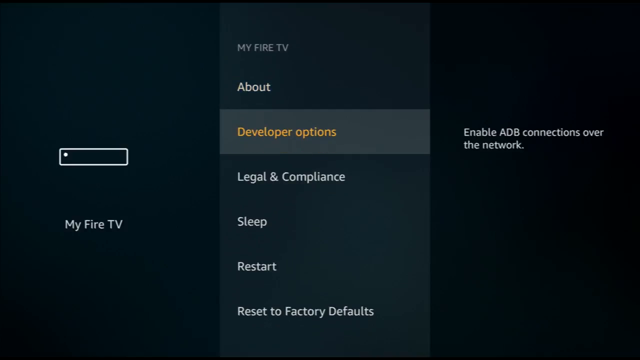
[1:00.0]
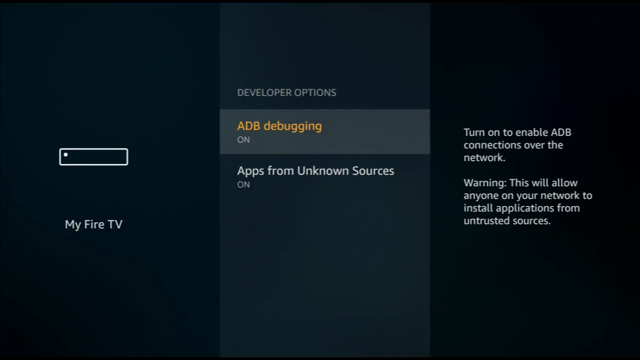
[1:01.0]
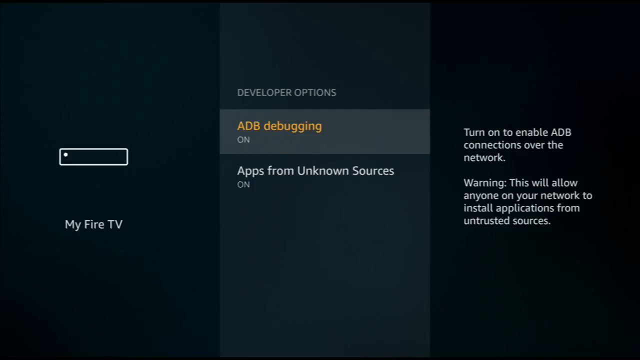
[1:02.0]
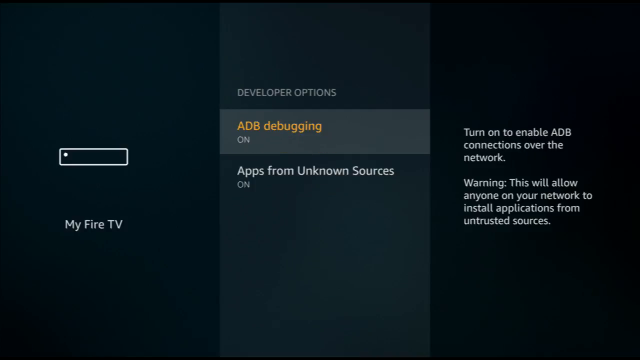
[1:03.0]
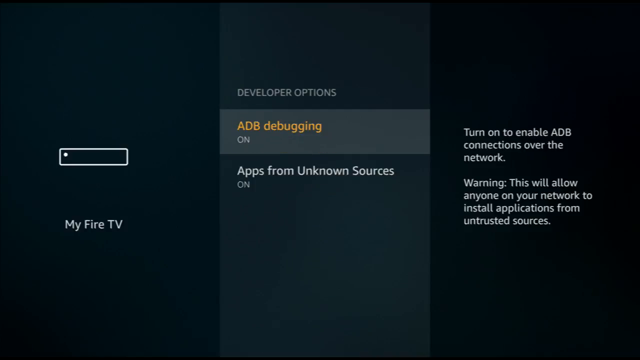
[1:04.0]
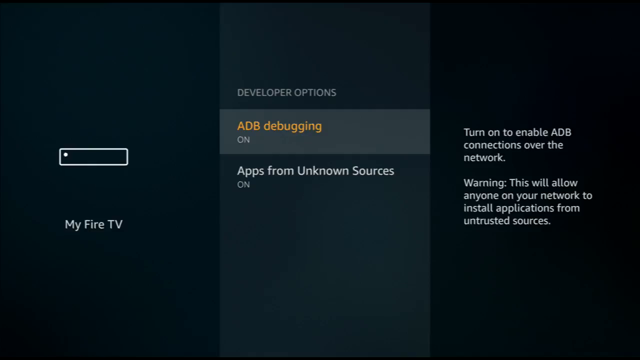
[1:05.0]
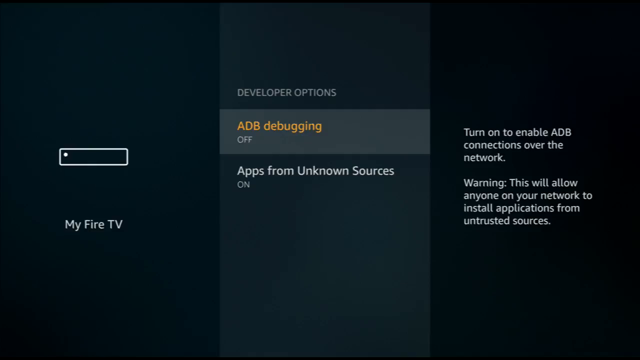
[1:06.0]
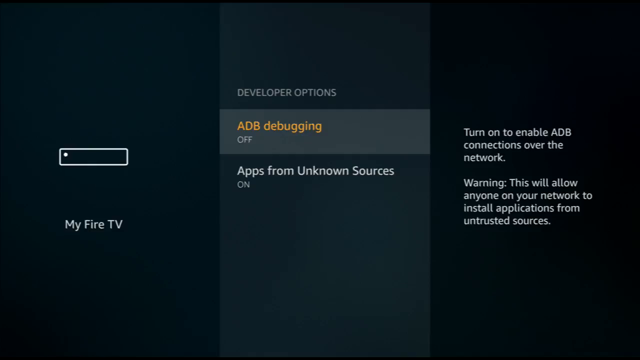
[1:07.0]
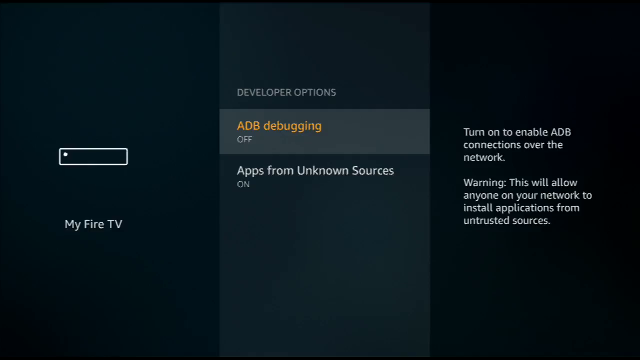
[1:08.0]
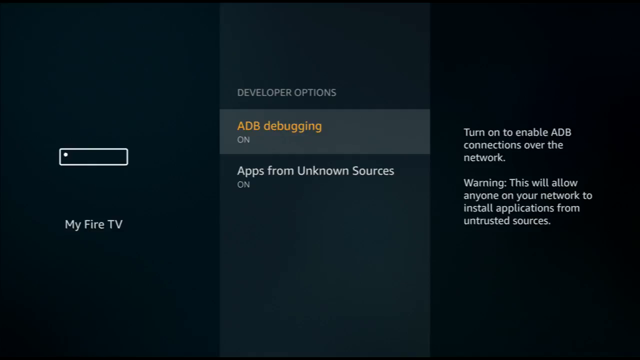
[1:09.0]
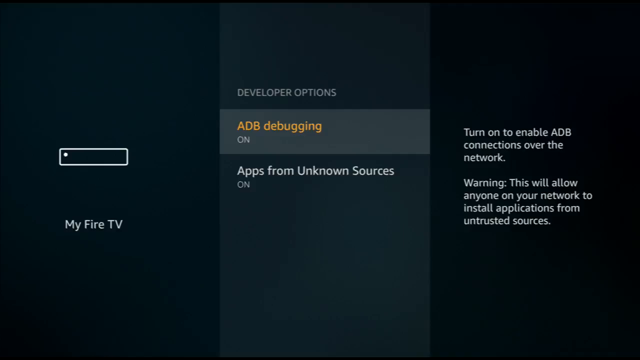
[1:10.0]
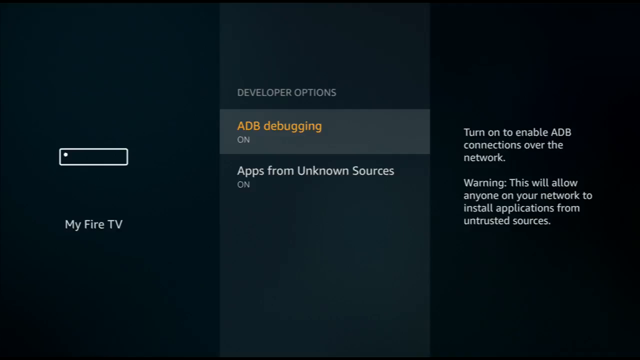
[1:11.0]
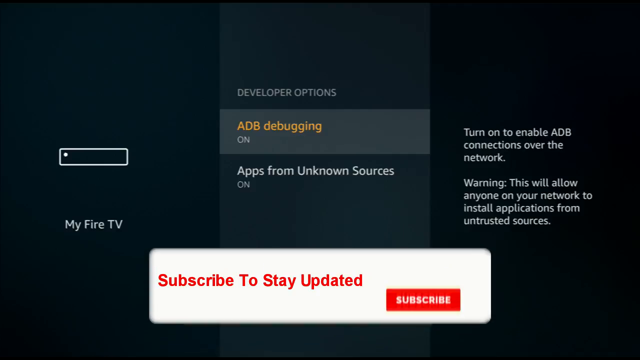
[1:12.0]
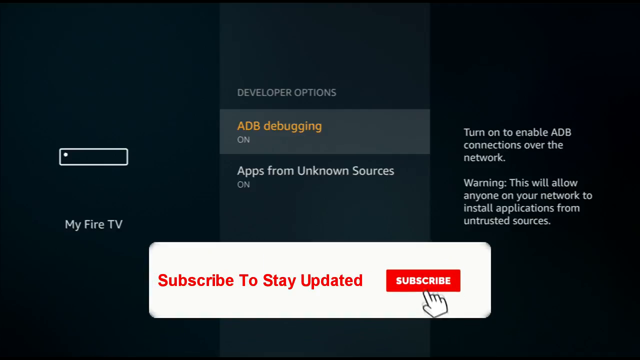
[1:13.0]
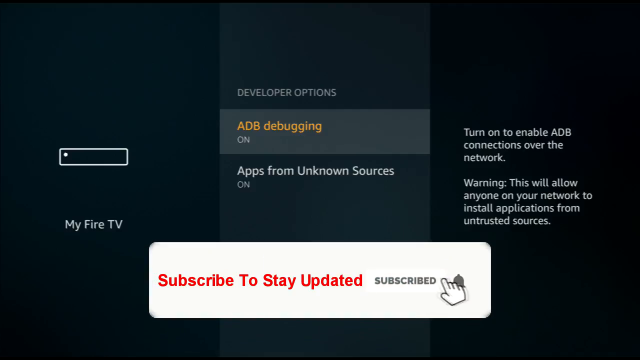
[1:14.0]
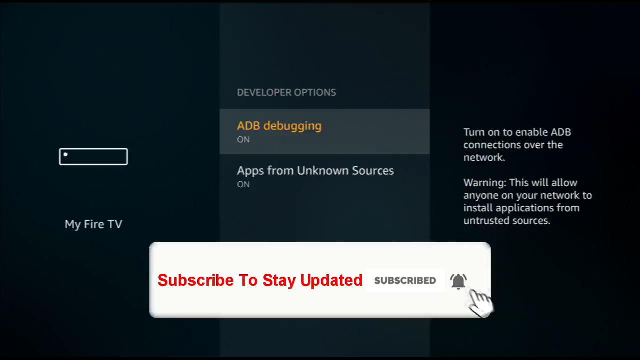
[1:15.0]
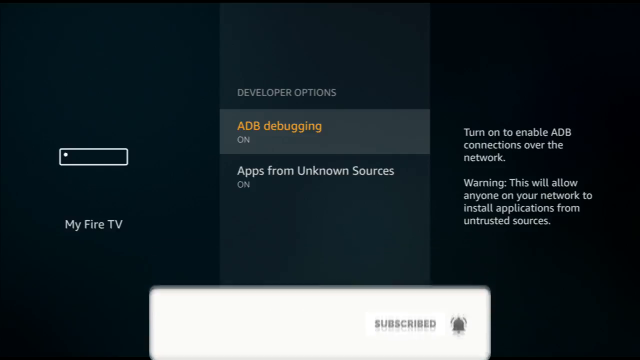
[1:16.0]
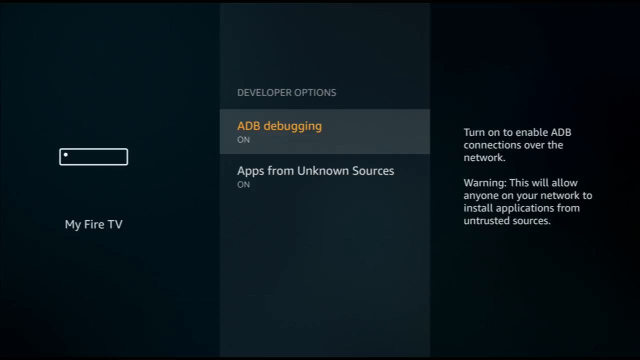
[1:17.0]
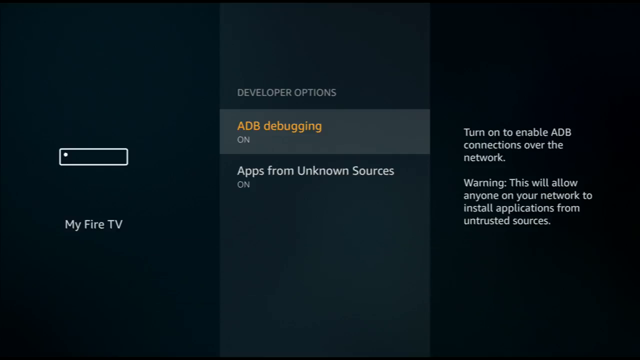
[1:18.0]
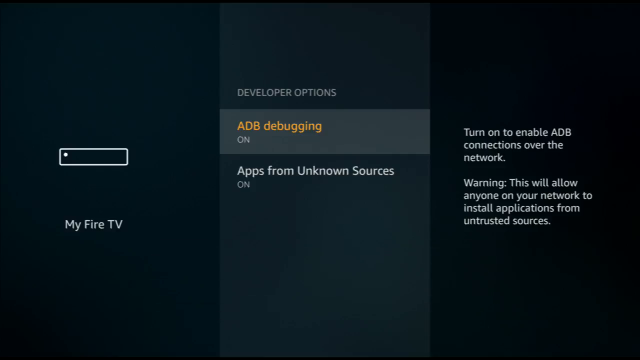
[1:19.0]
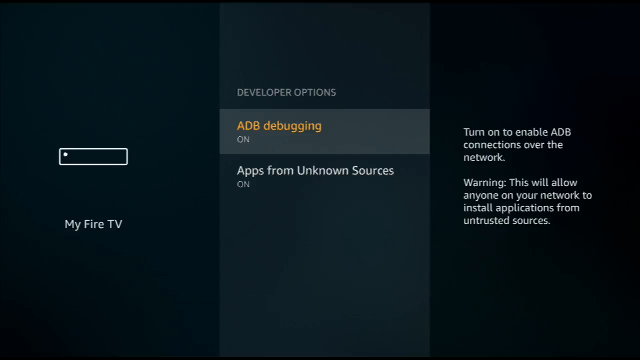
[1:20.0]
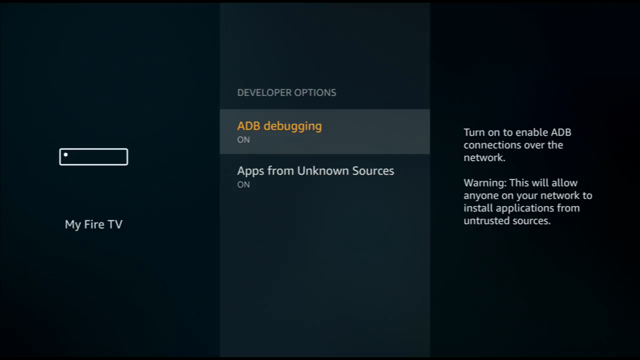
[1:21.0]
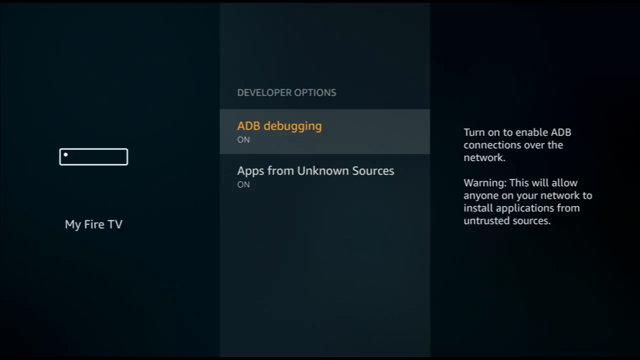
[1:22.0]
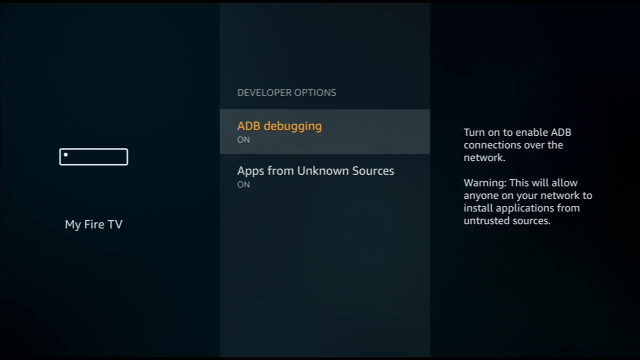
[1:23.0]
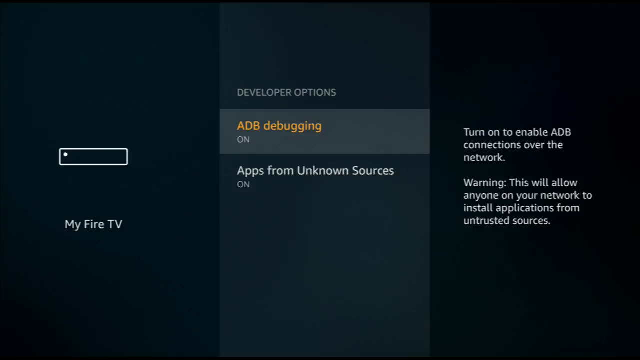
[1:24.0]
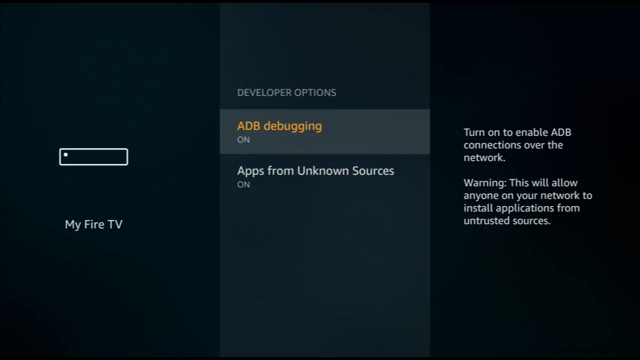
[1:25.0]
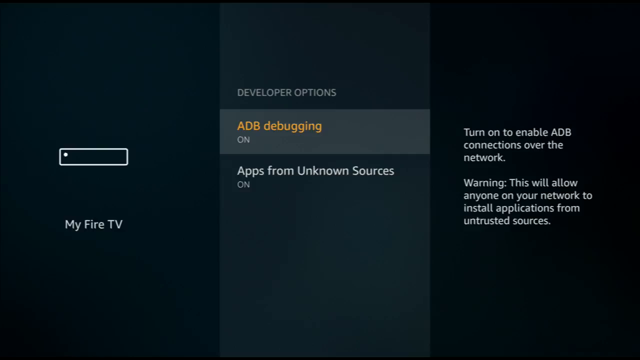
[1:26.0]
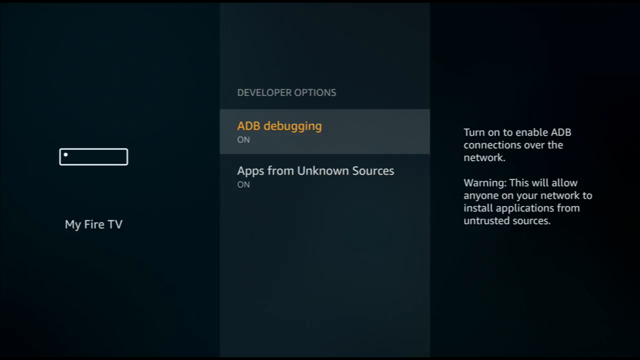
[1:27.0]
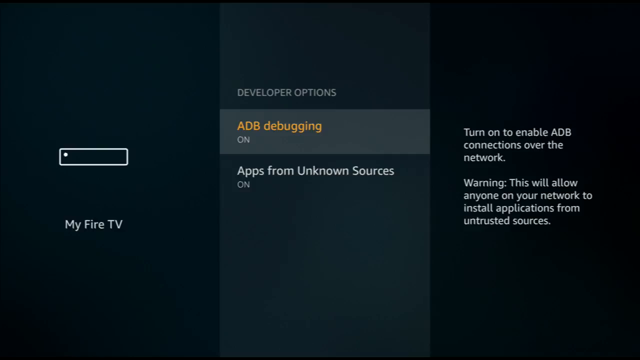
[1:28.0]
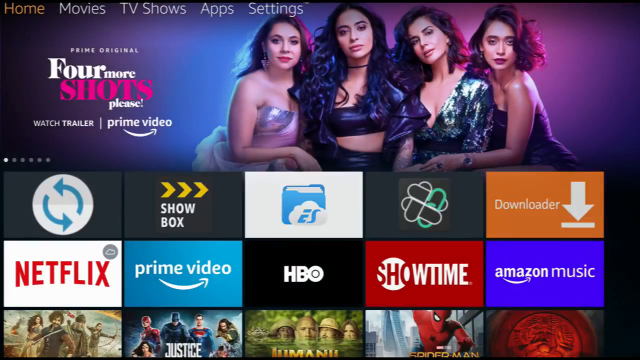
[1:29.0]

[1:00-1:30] Still in settings, the user scrolls down to developer options, where another prompt titled "developer options" shows two settings: ADB debugging, shown as on, and apps from unknown sources, also shown as on. The user stays on ADB debugging while text on the right side explains the setting, along with a warning giving a disclaimer and additional information. At the bottom of the screen, the white and red "subscribe to stay updated" box pops up again, with the subscribe animation clicked again and the bell rung again for notifications. The box disappears back to the bottom of the screen, and the ADB debugging setting remains selected with its information still on the right side. The user then exits back to the home screen, which again shows the promotional Prime TV show with its colorful background and four characters at the front, and the apps and movies along the very bottom.